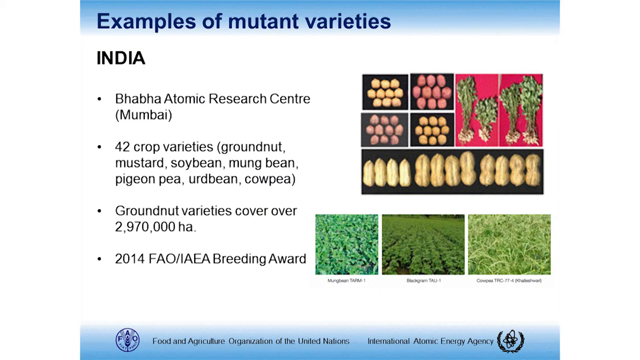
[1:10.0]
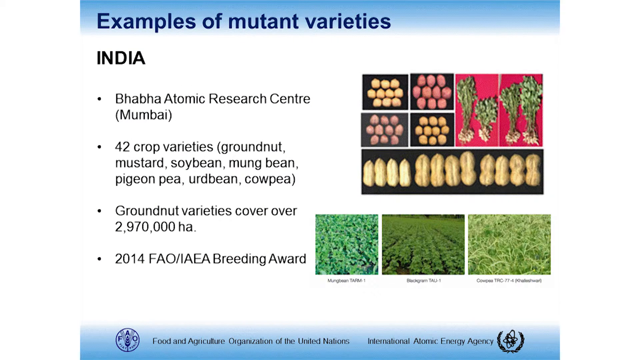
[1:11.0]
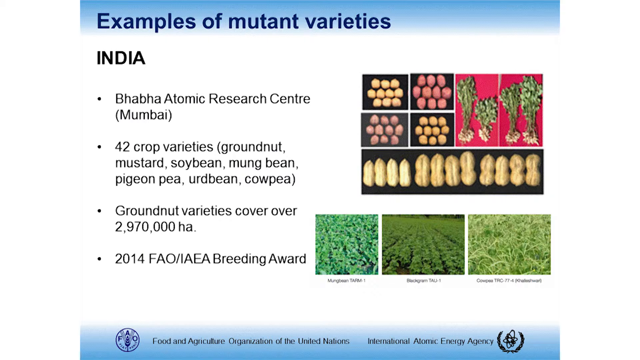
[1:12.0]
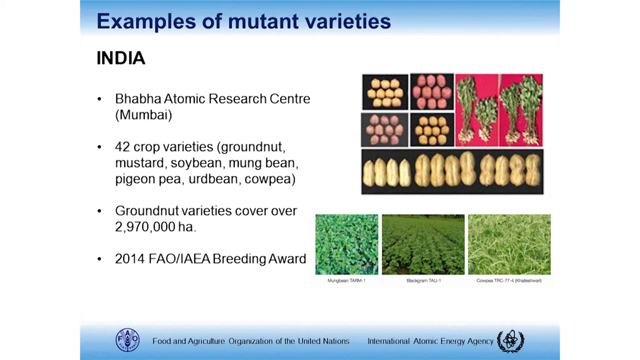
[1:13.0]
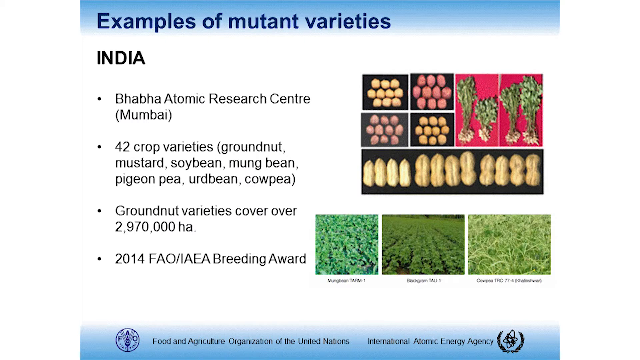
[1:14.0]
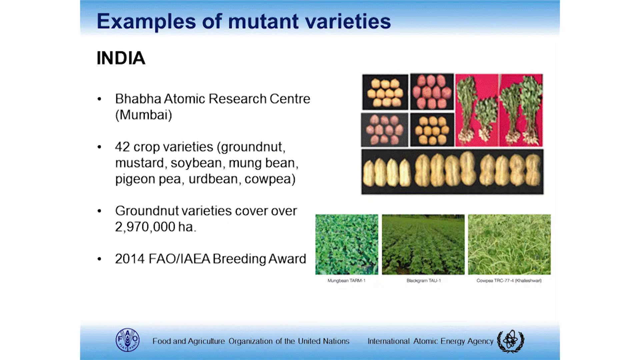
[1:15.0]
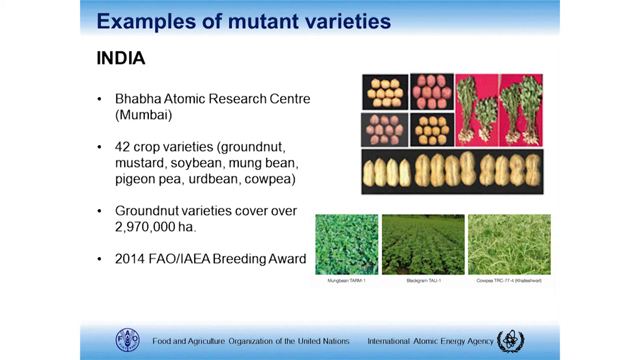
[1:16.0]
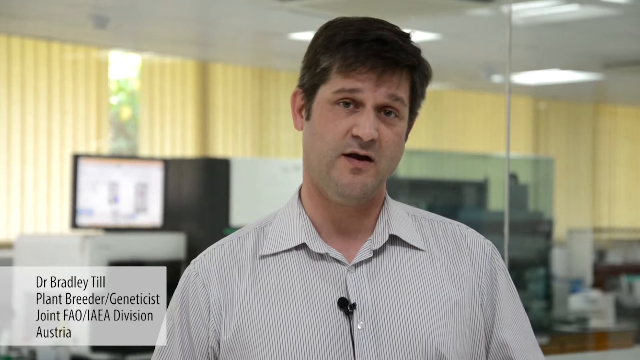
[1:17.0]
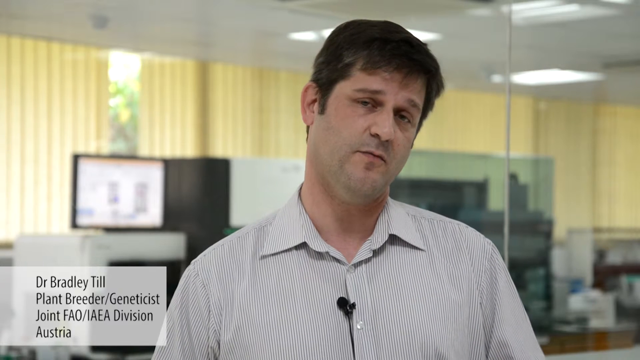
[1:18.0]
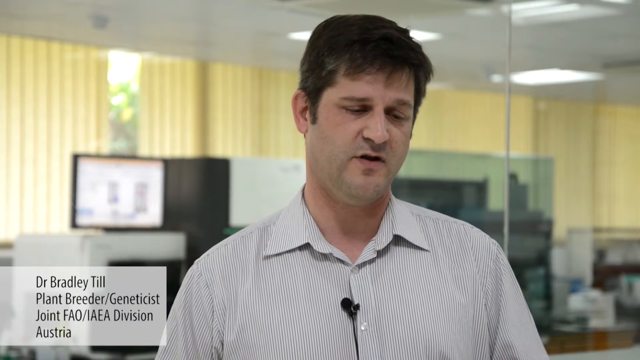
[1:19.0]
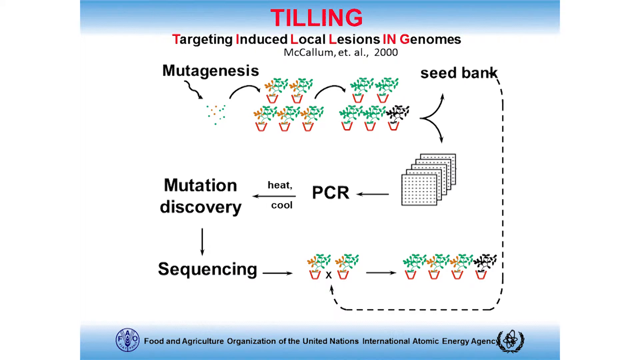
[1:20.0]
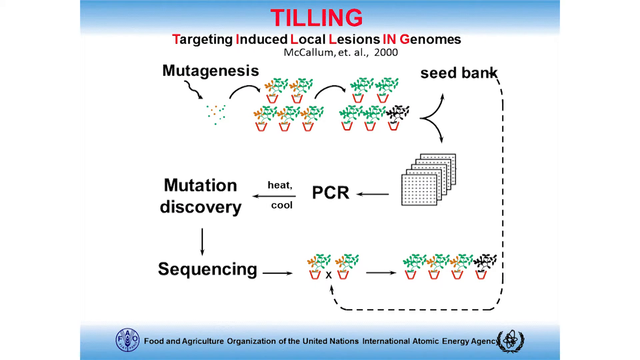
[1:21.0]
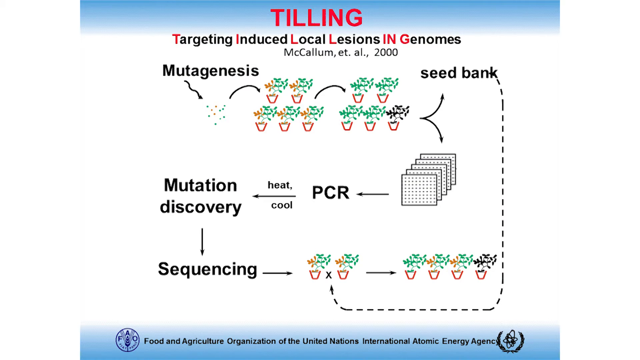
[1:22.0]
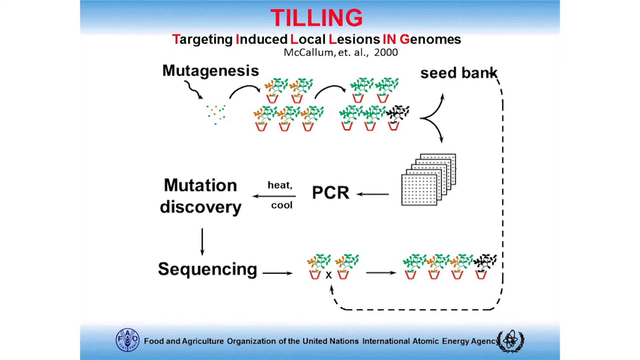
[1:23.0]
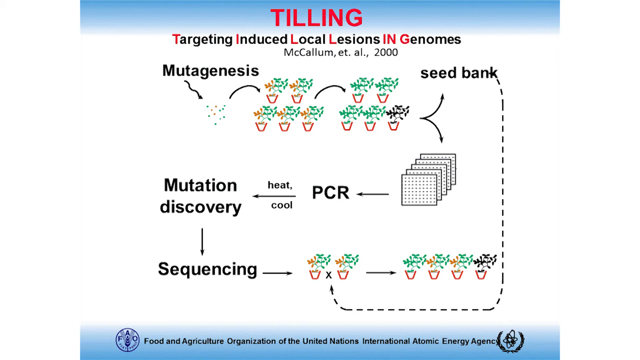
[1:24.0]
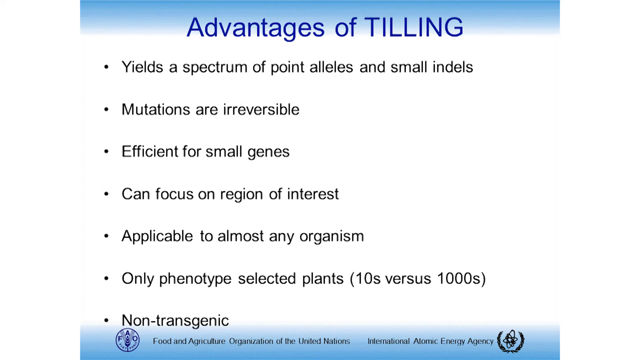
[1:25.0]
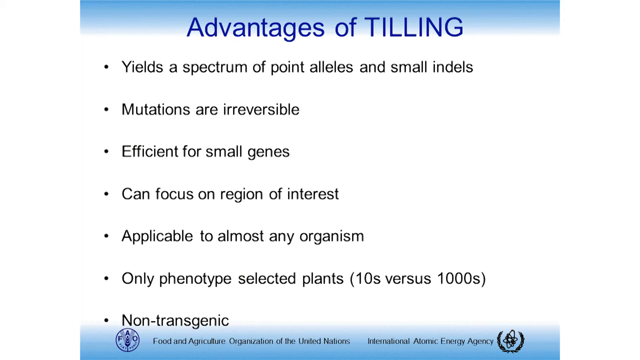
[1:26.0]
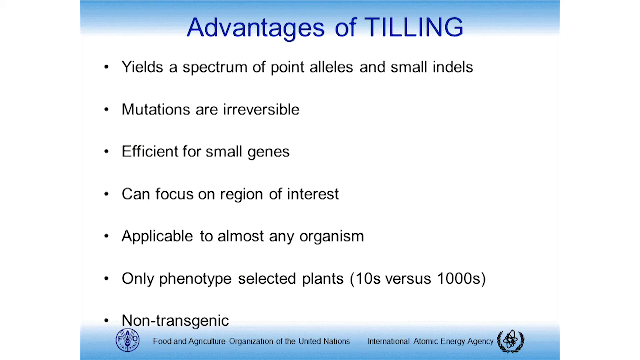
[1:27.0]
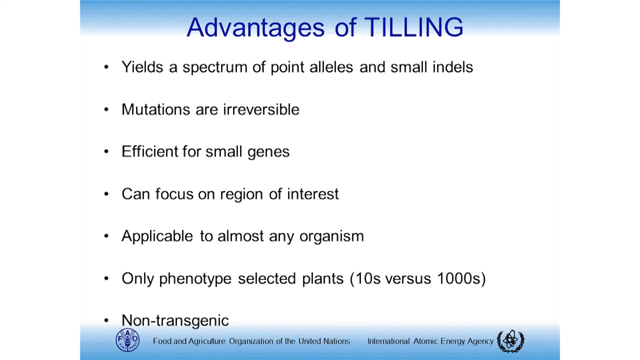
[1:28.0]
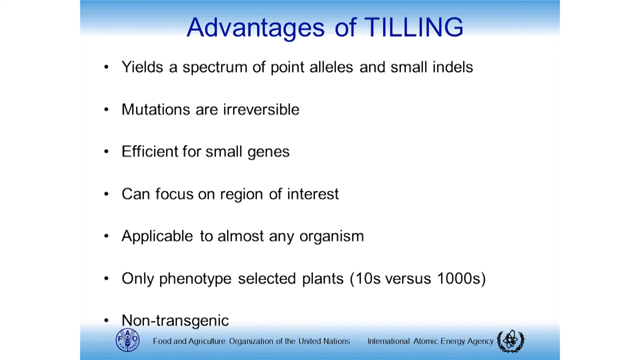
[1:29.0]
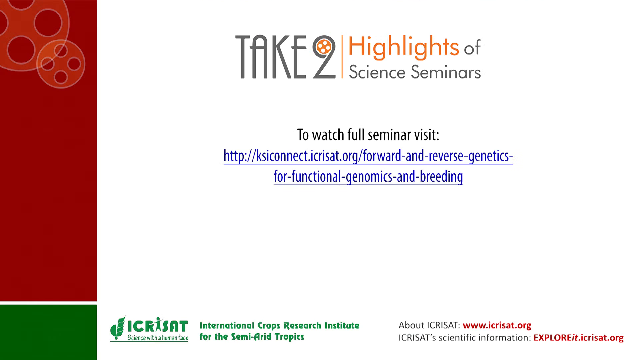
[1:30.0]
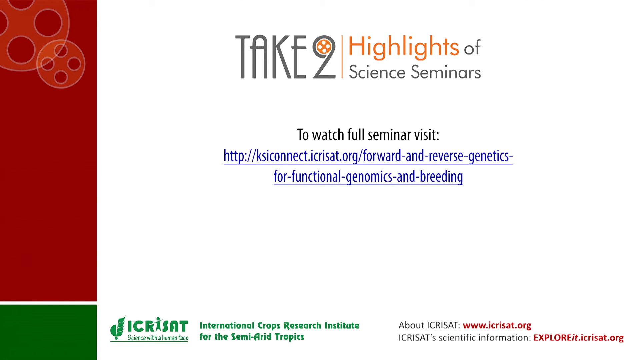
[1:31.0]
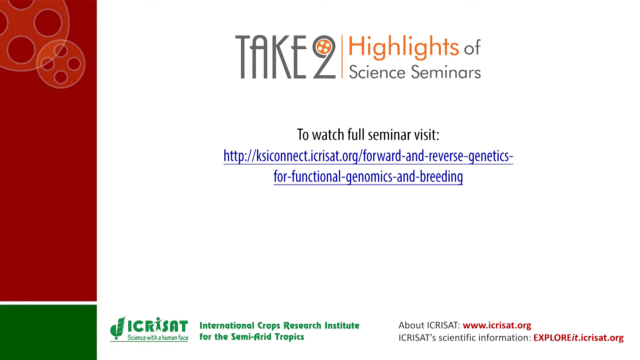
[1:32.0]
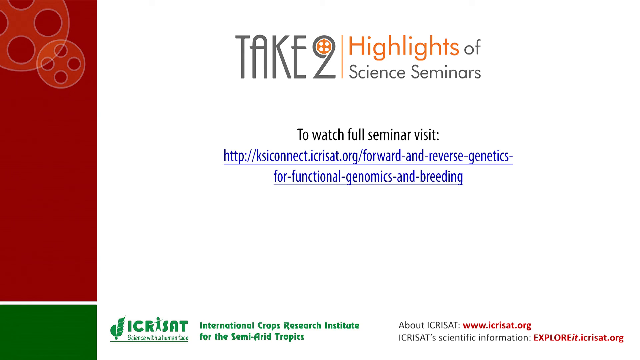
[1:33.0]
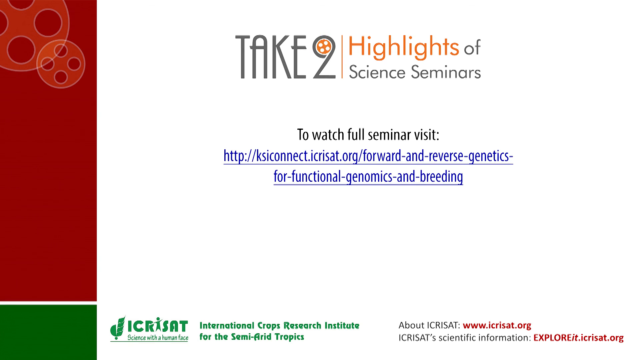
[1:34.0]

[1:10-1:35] A white slide has the heading "examples of mutant varieties", with "India" underneath and a bulleted list: "Bhabha Atomic Research Center, Mumbai", "42 crop varieties, groundnut, mustard, soybean, mung bean, pigeon pea, urdbean, cow pea", "groundnut varieties cover over 2,970,000 ha", and "2014 FAO and IAEA Breeding Award". On the right side is a collage of images that look like different types of beans and peas, and beneath it three more images of what look like the plants planted in fields and growing. The video returns to the interview with the man who appears to be Dr. Bradley Till, a plant breeder and geneticist with the joint FAO and IAEA division in Austria. He says a few words, and then a white slide appears with "tilling" at the top and "targeting induced local lesions in genomes" underneath, followed by a flow chart showing the tilling process. Another slide has the heading "Advantages of tilling" and a bulleted list: "yields a spectrum of point alleles and small indels", "mutations are irreversible", "efficient for small genes", "can focus on region of interest", "applicable to almost any organism", "only phenotype-selected plants" with "(tens versus a thousands)" in parentheses, and "non-transgenic". The ending slide is white, with "take two highlights of science seminars" at the top and "to watch full seminar visit" followed by a website link underneath.